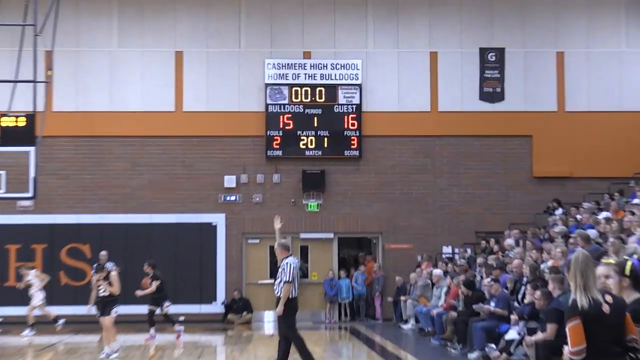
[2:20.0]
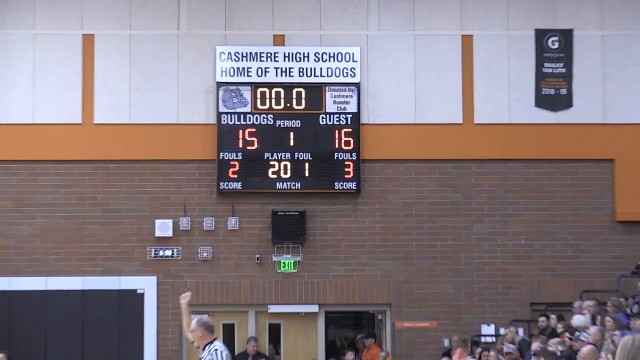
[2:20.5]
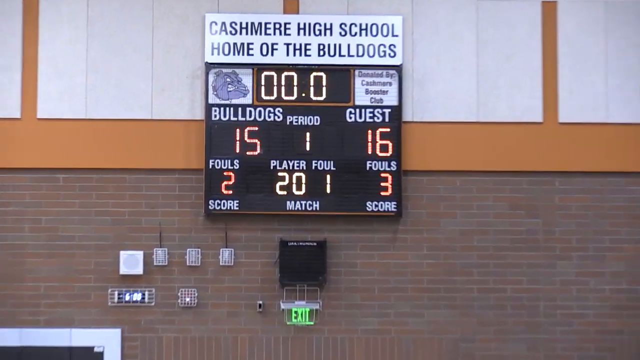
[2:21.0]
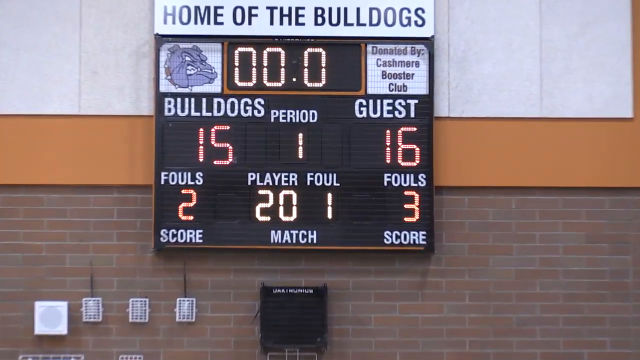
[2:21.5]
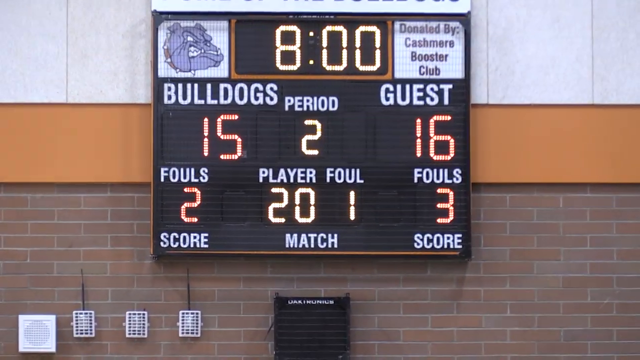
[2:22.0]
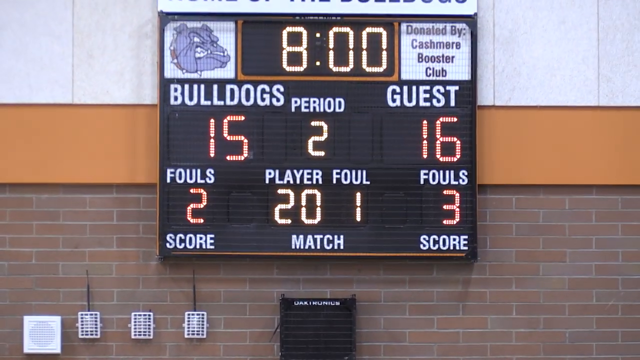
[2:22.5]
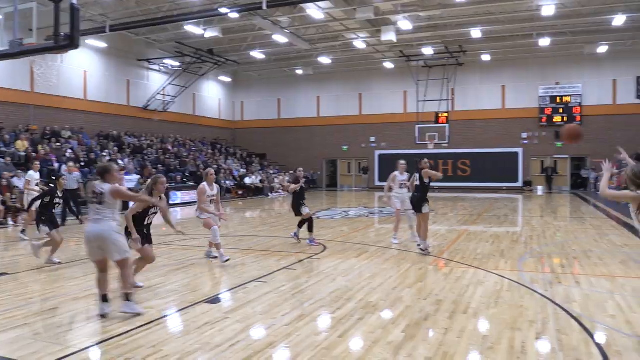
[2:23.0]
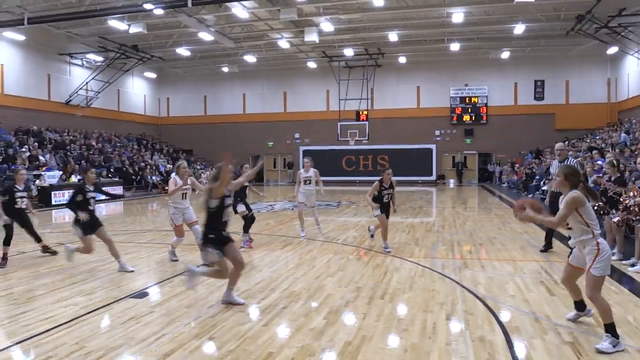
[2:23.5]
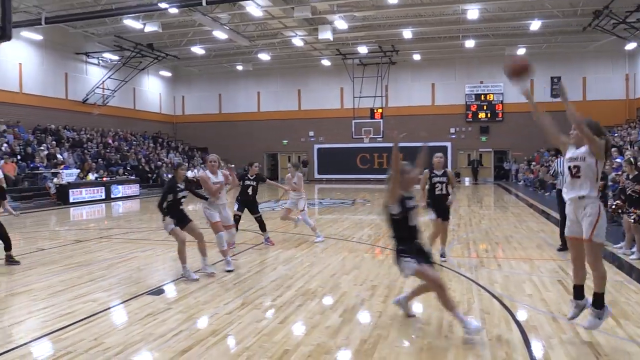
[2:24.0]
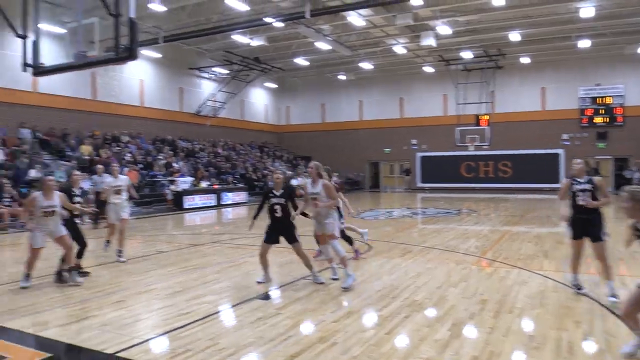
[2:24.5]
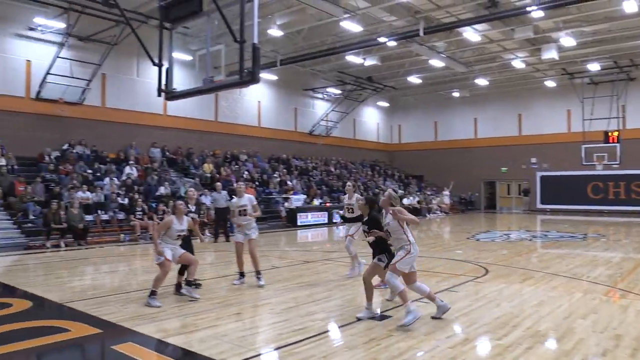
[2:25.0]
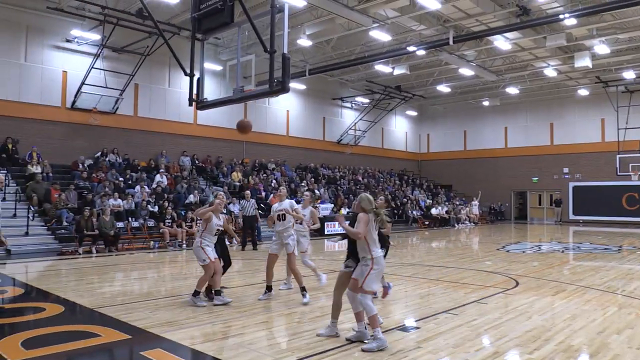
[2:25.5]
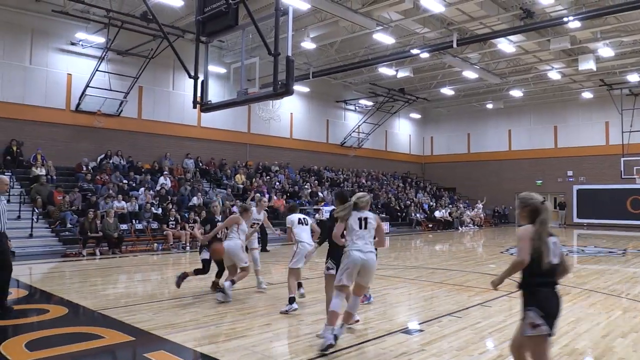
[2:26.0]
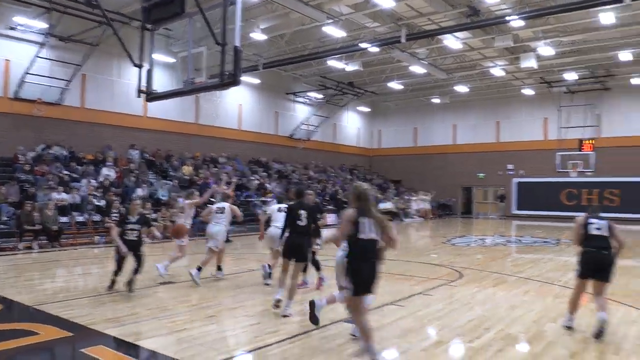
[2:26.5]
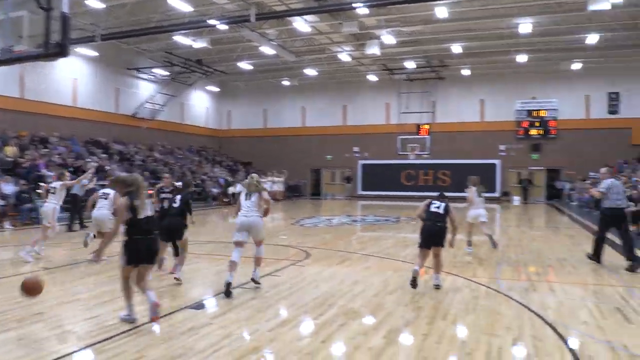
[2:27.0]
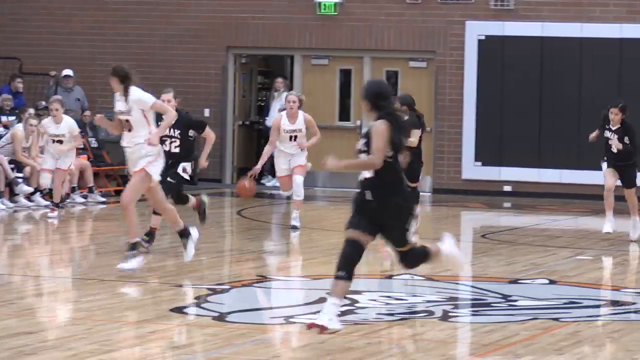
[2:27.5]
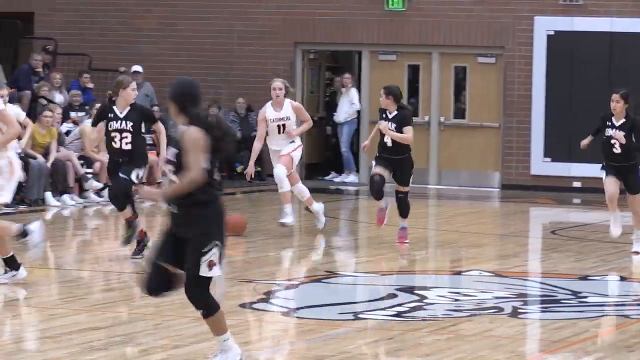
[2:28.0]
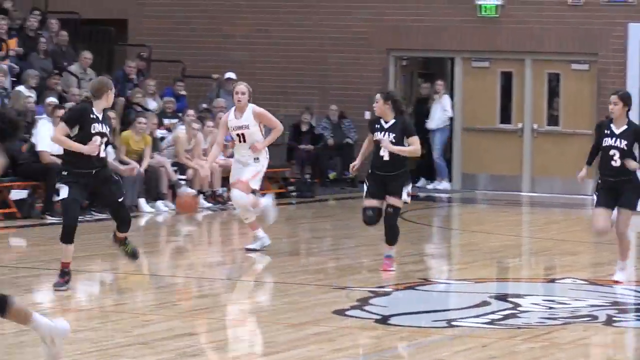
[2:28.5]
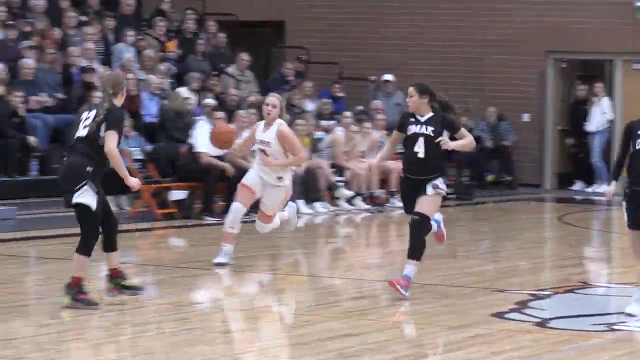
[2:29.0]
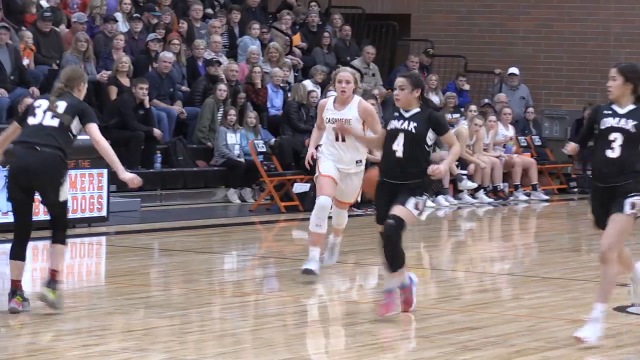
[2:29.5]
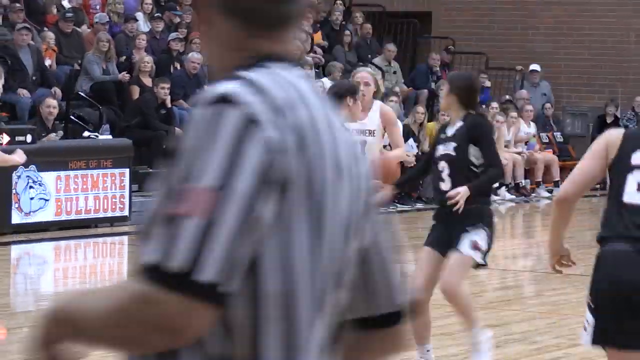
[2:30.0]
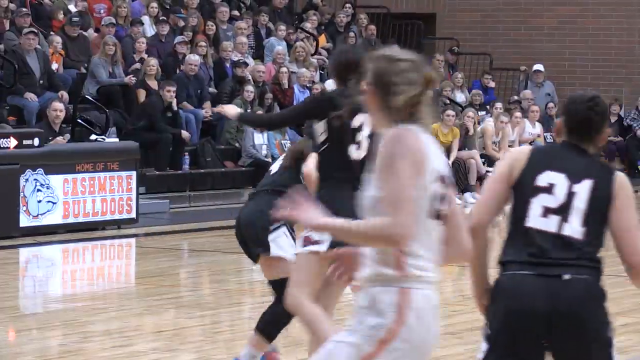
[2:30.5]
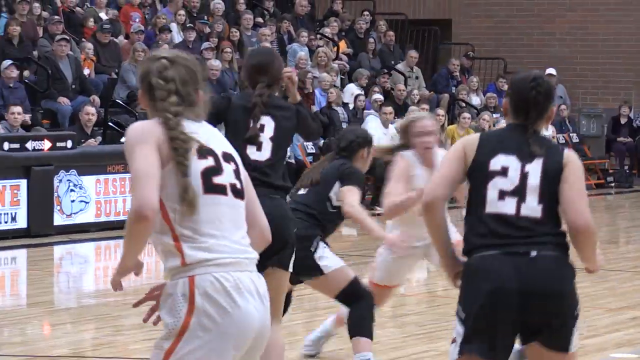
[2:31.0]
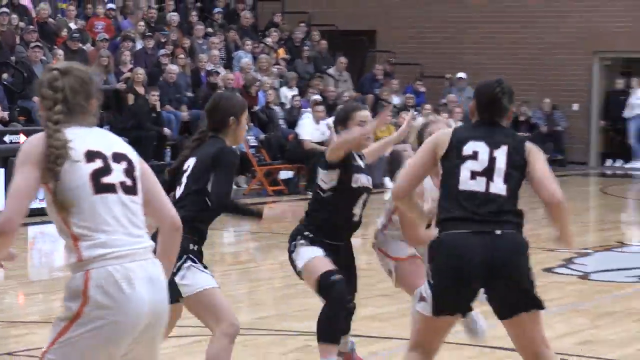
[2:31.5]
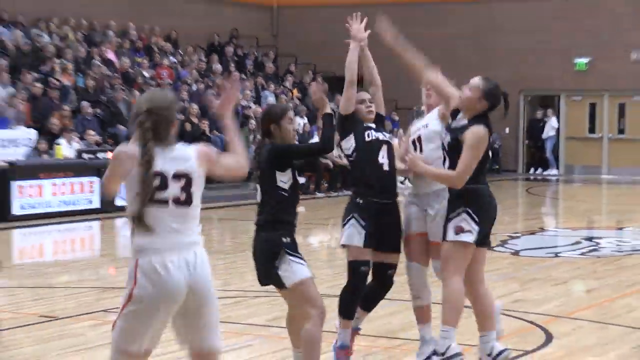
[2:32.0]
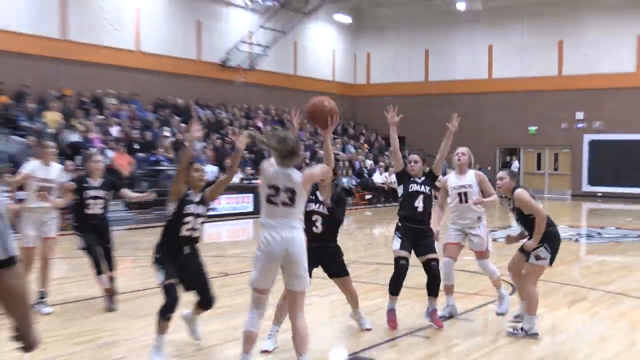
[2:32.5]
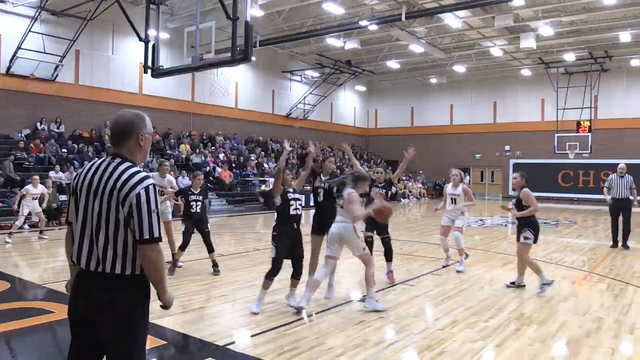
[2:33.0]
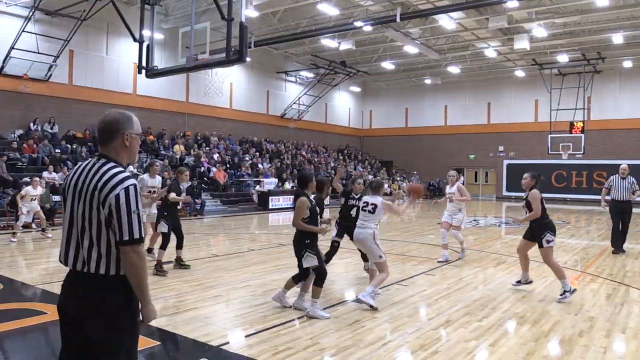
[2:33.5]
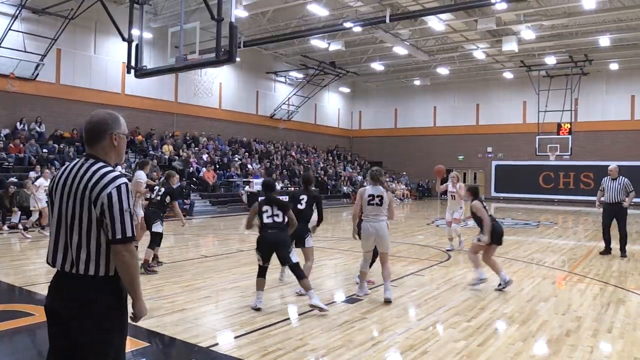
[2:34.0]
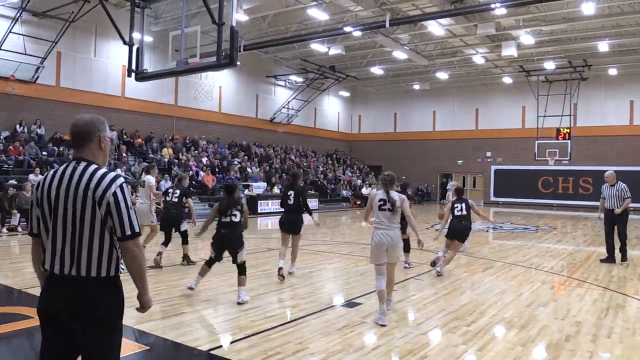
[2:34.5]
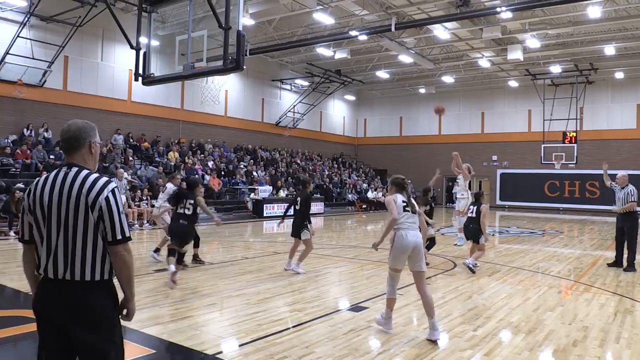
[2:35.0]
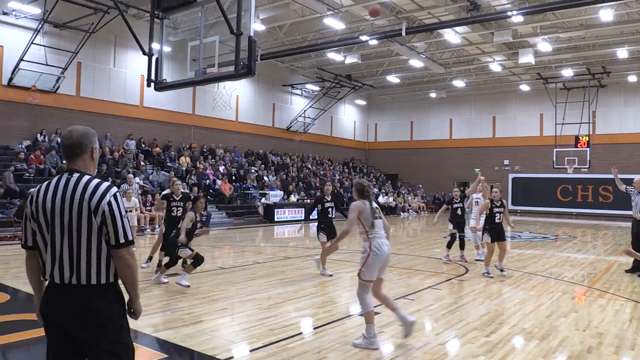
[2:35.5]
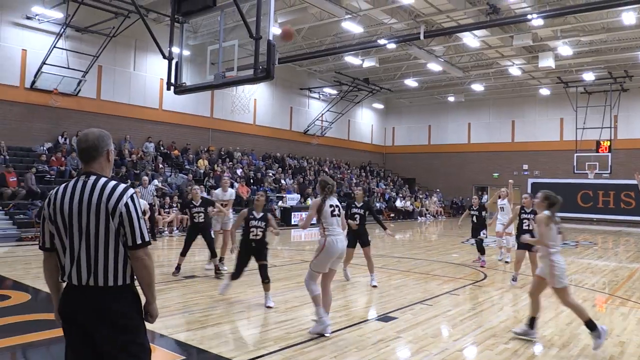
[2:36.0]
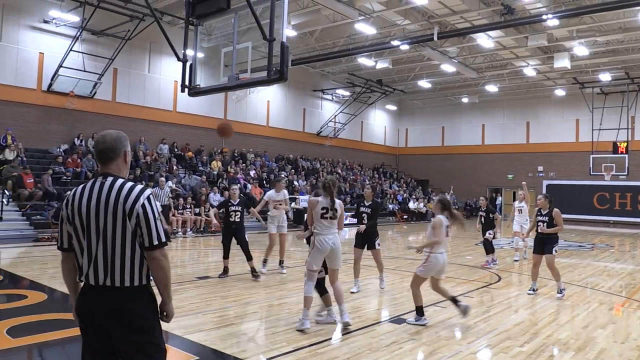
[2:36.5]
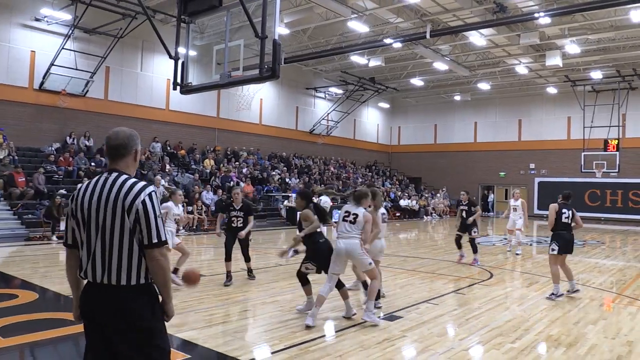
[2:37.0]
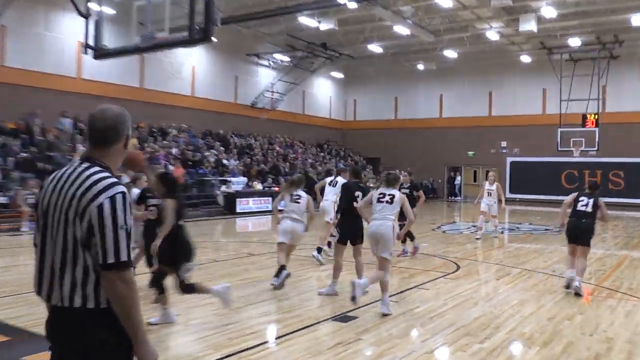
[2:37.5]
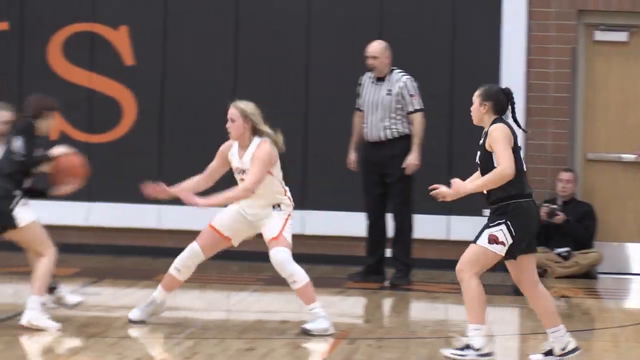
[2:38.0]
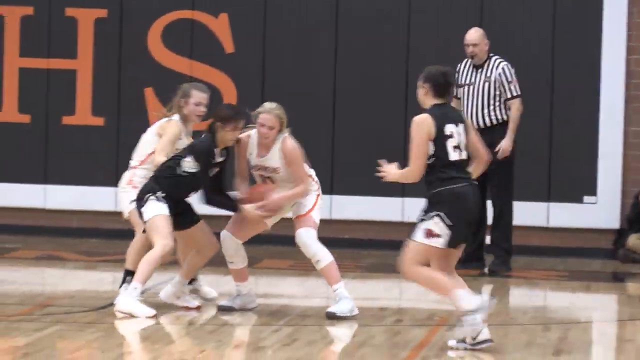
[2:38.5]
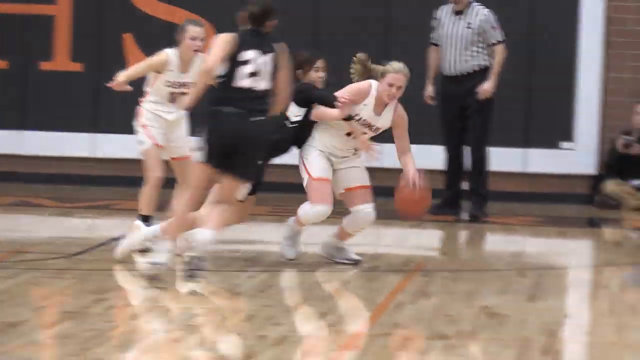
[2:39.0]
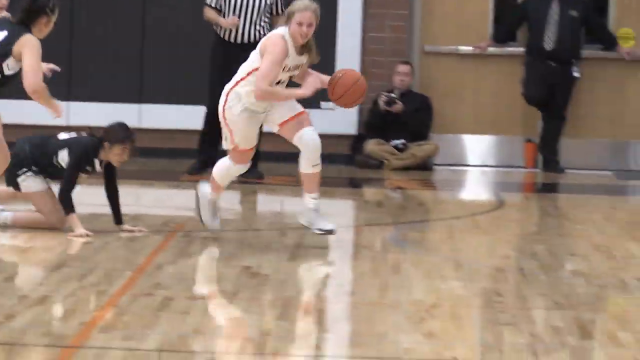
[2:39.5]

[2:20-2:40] The camera zooms in on the scoreboard. The time reads 0-0, apparently meaning no time is left in the first quarter. The score is Bulldogs 15, guests 16, with the Bulldogs on two fouls and the guests on three. Above it is a white banner that reads "Kashmir High School, home of the Bulldogs". The camera zooms way in, and the quarter changes to 2. The video then cuts to live basketball: a pass goes to the corner, where a player on the white team shoots a three-pointer that goes in, and players start running to the other side of the court. From a different angle, players come down toward the camera. Number 11 has the ball, dribbles, passes to number 23, and gets the ball back for a three-pointer at the top of the key, which she makes. The same player then steals the ball and starts dribbling toward the center of the court.